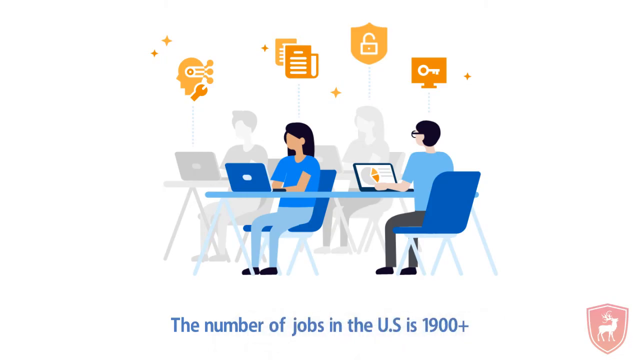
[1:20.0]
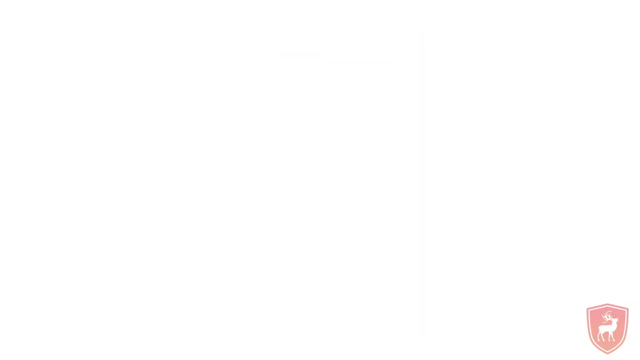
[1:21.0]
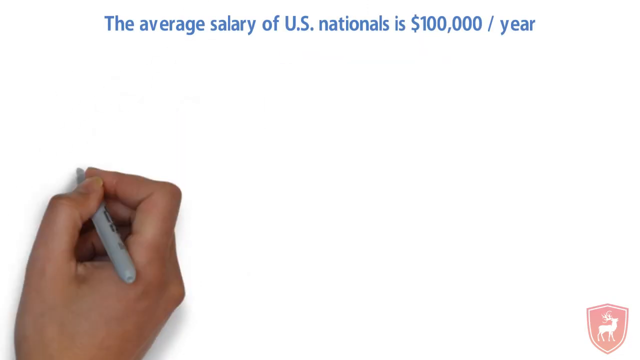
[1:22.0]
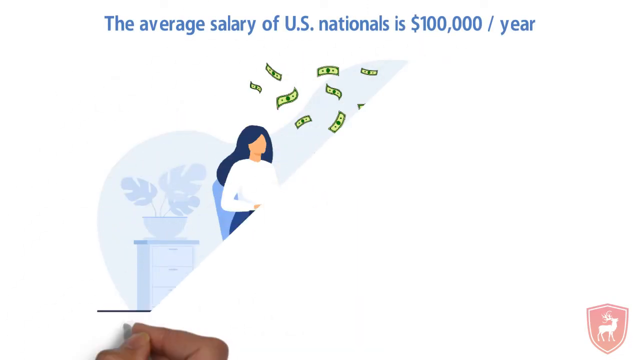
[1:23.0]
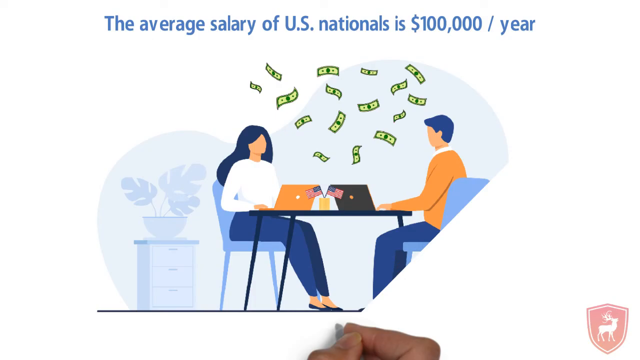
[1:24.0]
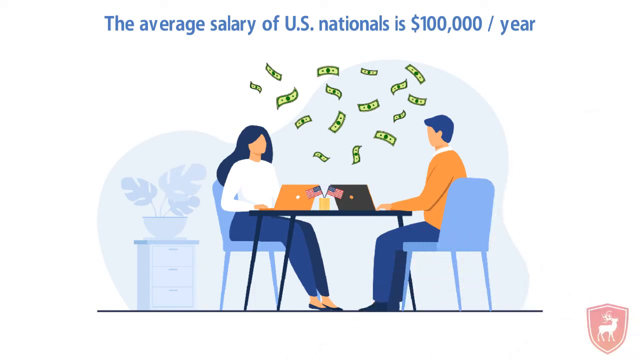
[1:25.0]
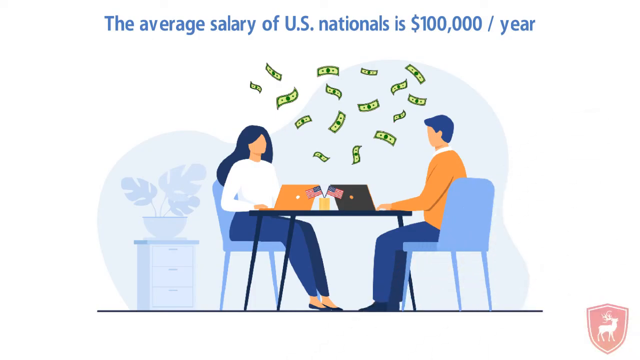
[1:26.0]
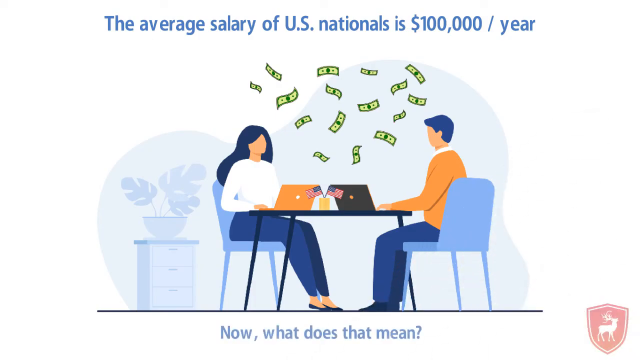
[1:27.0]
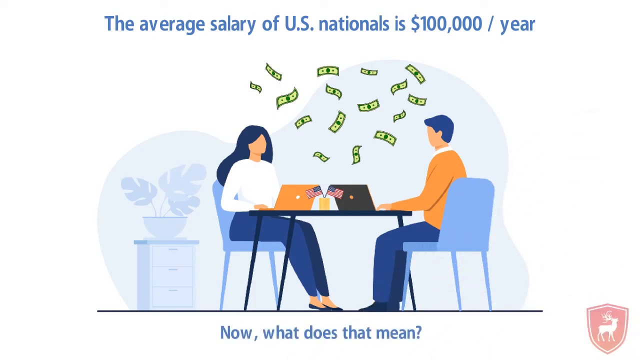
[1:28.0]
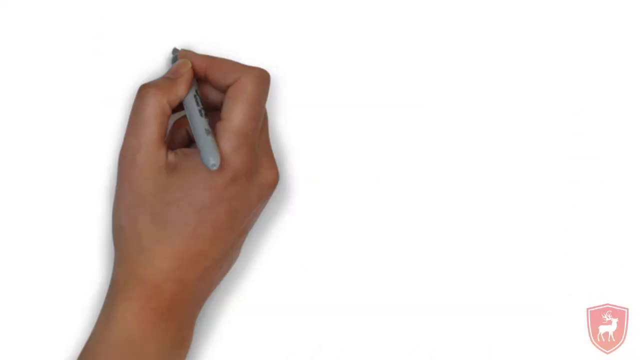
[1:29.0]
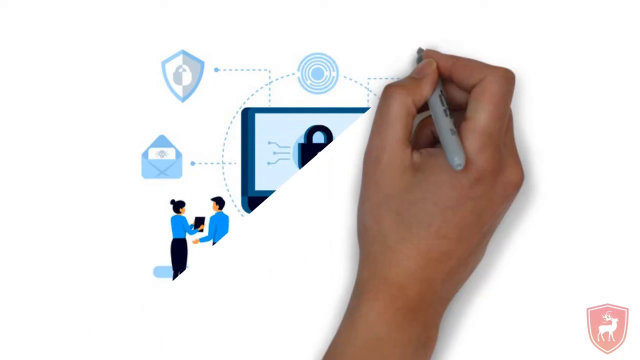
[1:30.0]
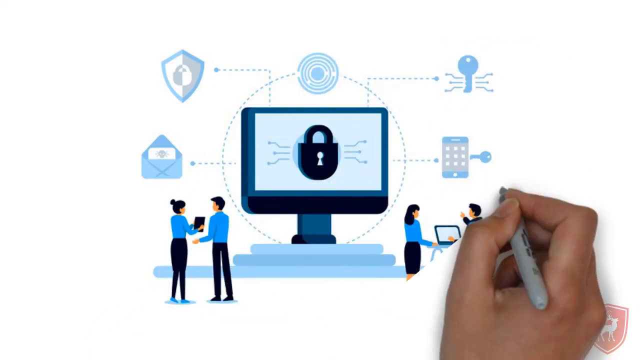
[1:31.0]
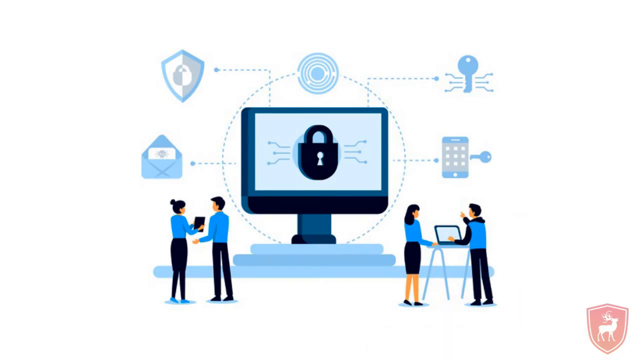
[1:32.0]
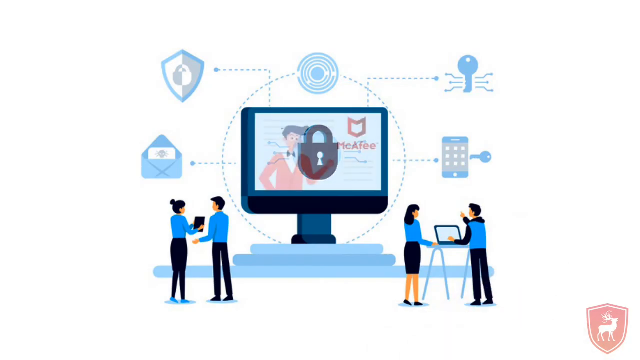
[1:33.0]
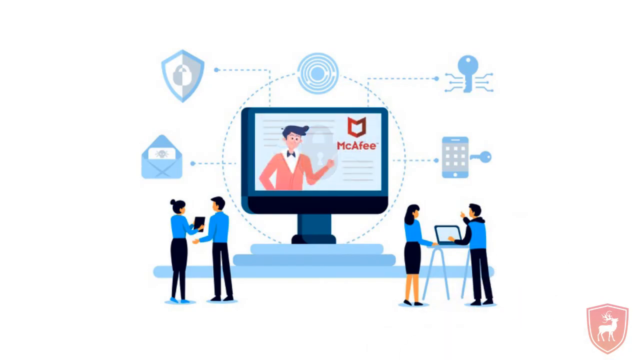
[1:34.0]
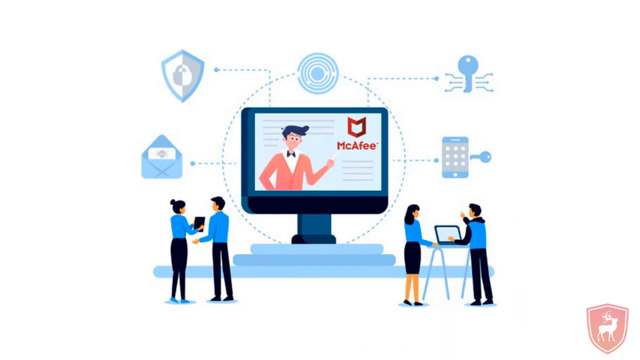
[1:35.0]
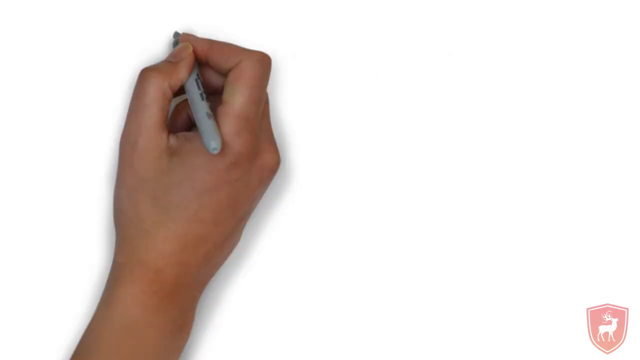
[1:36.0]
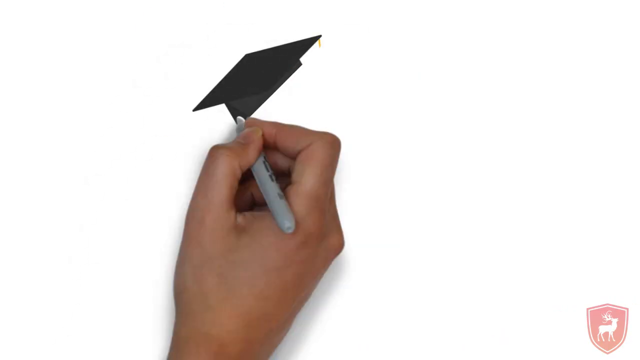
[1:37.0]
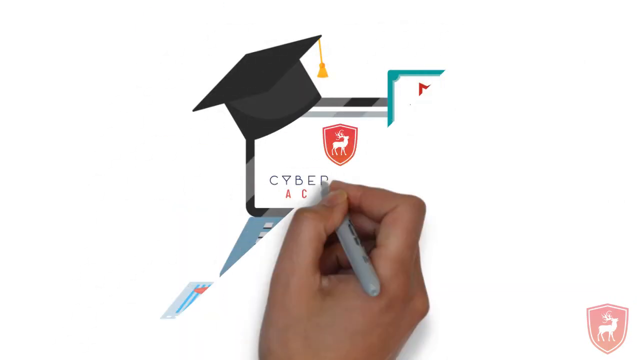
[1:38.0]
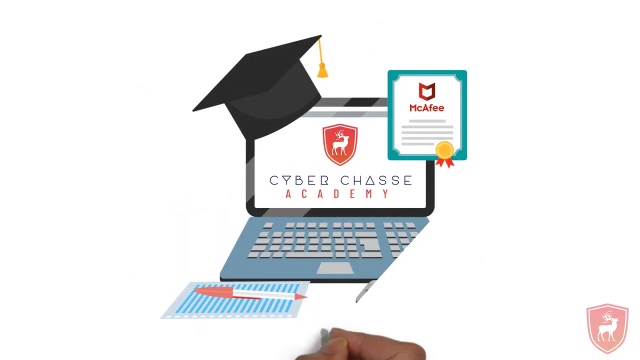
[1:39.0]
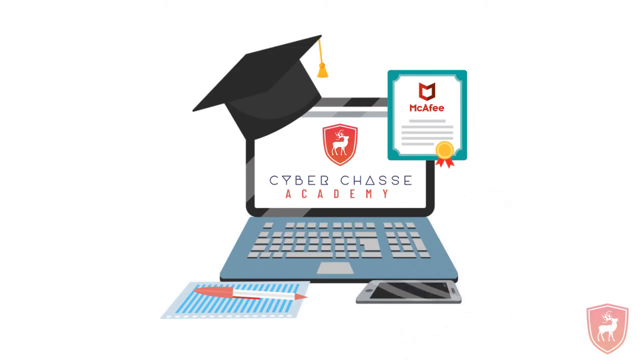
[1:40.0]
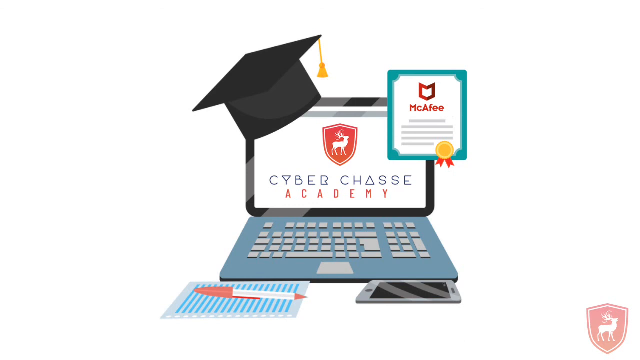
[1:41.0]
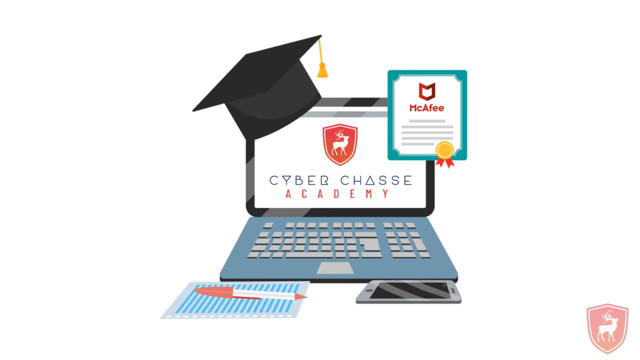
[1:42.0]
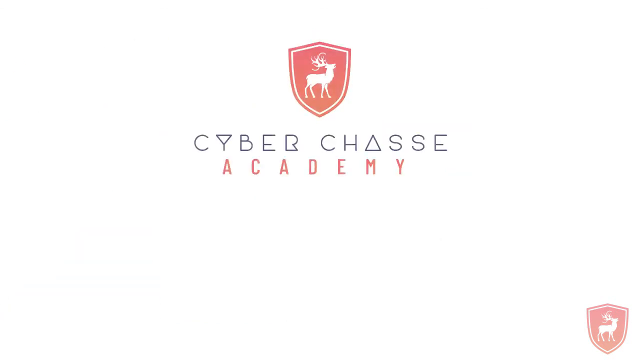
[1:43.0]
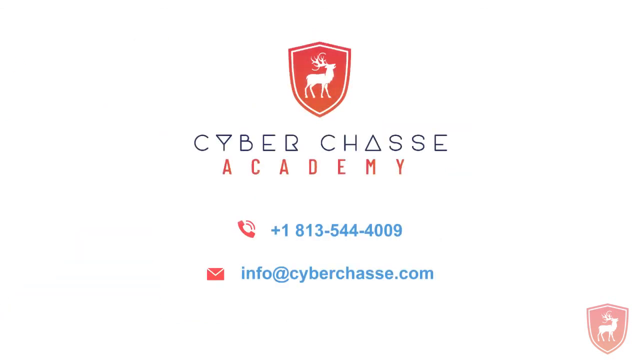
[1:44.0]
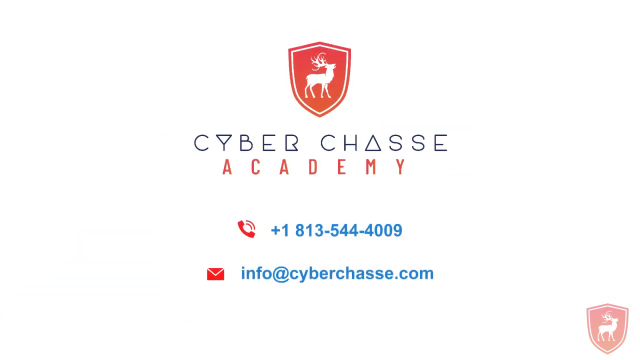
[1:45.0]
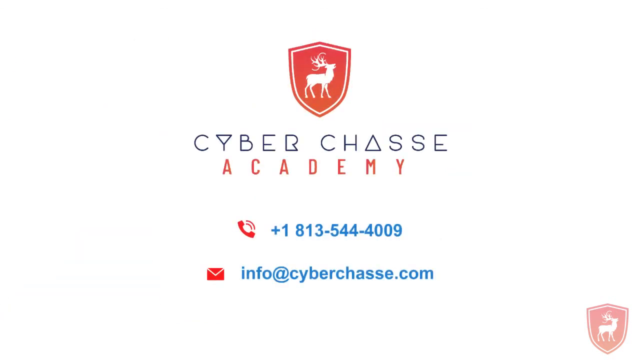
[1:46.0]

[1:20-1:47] The video seems to state that the average salary in the field for U.S. nationals is $100,000 a year, and mentions McAfee supplying money to families with laptops. The video turns out to be from Cyber Security rather than from McAfee. The $100,000 figure for security jobs appears alongside a figure of around 2,000 jobs.